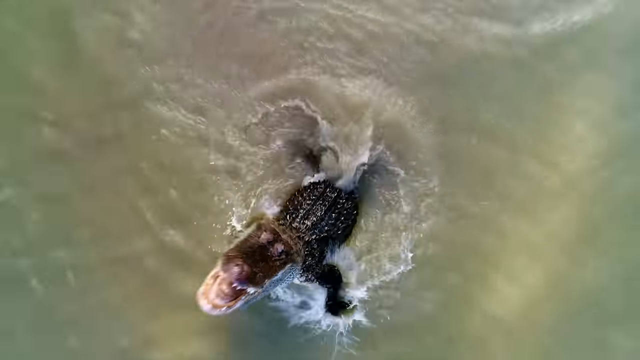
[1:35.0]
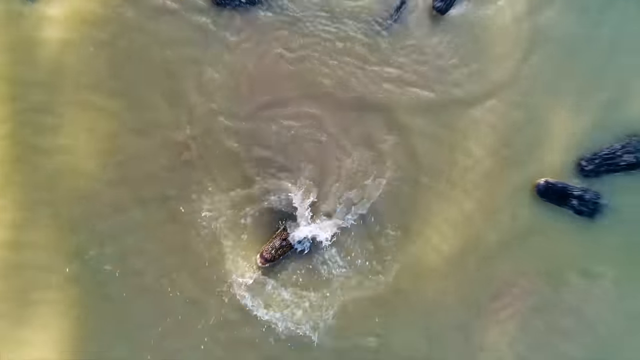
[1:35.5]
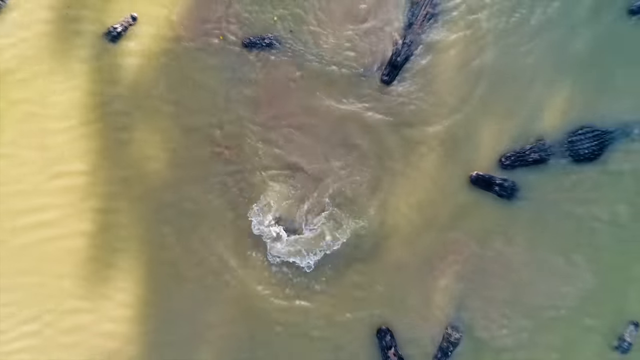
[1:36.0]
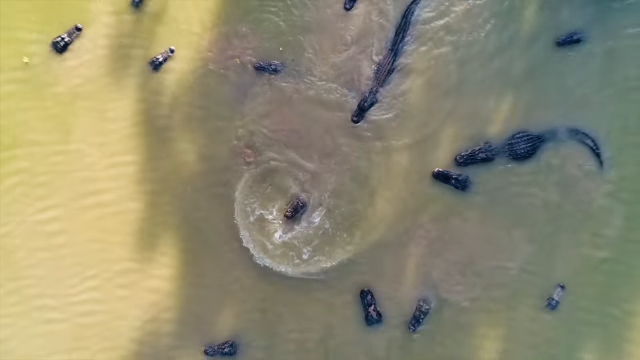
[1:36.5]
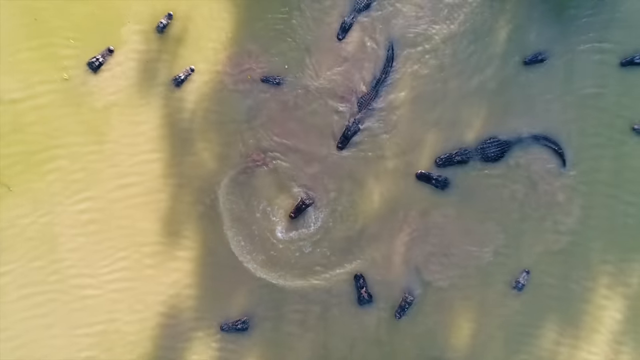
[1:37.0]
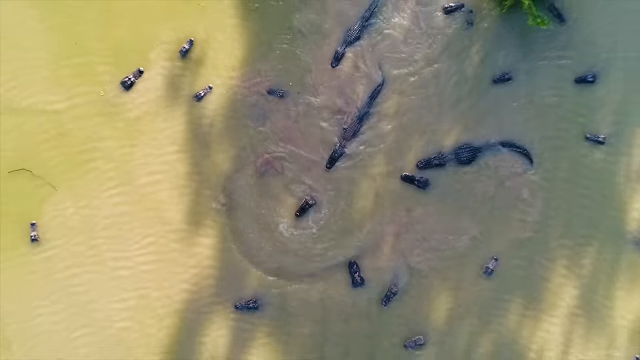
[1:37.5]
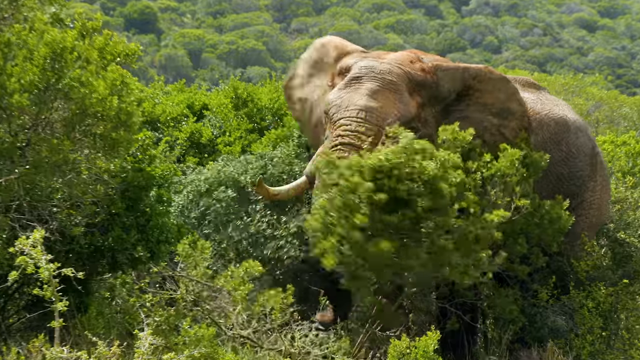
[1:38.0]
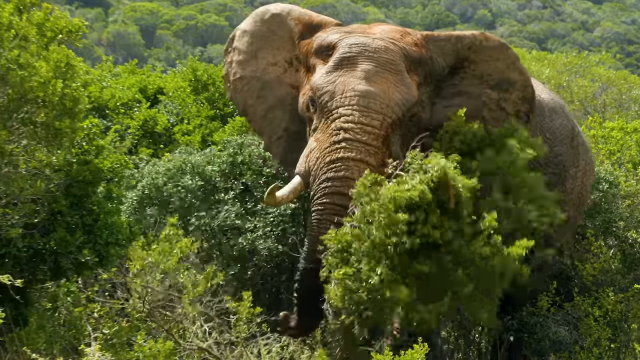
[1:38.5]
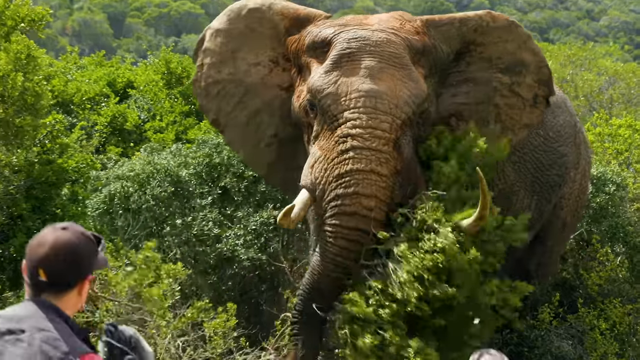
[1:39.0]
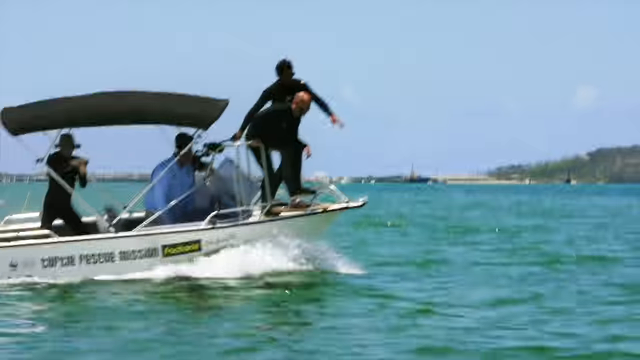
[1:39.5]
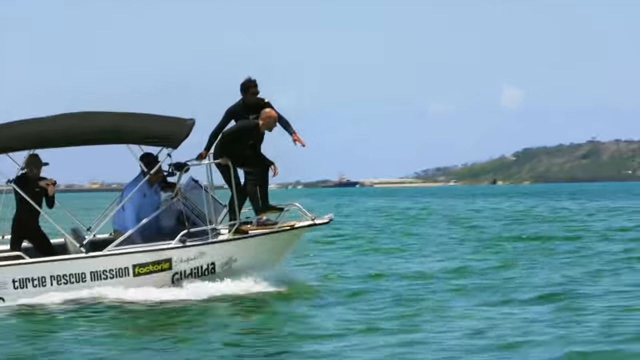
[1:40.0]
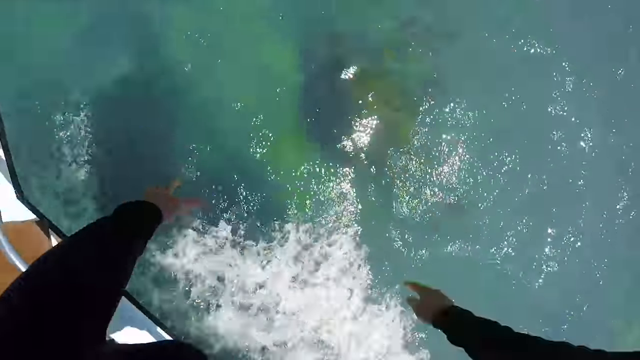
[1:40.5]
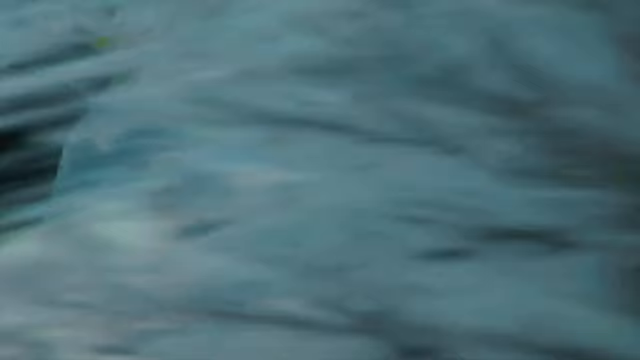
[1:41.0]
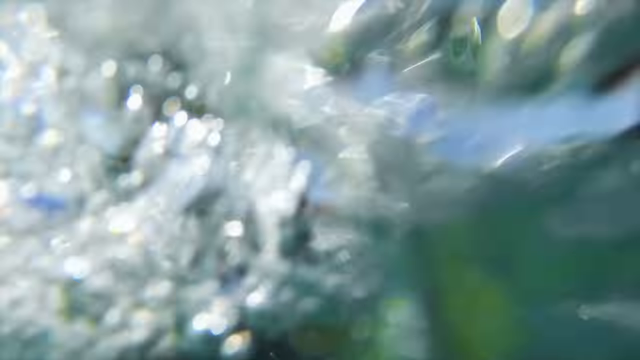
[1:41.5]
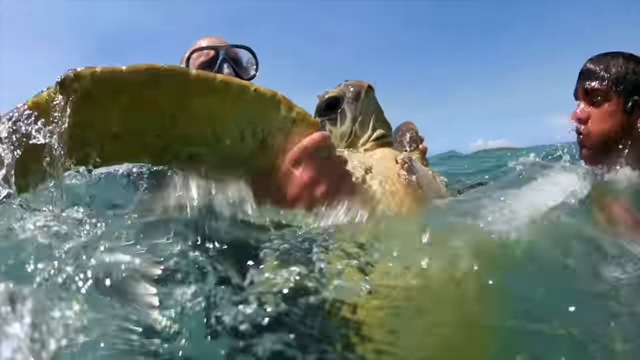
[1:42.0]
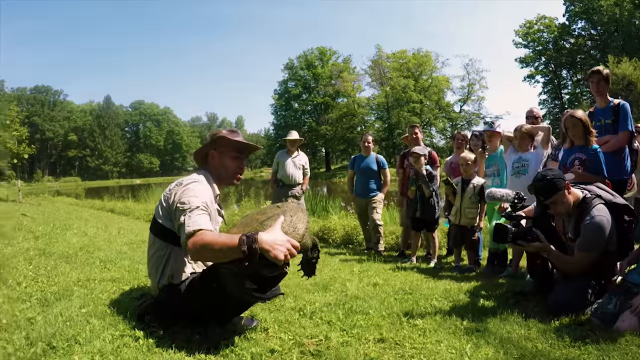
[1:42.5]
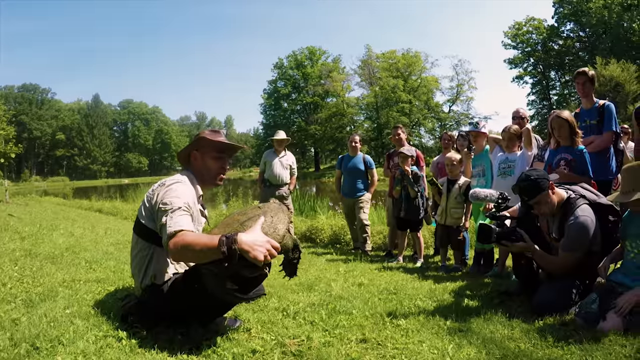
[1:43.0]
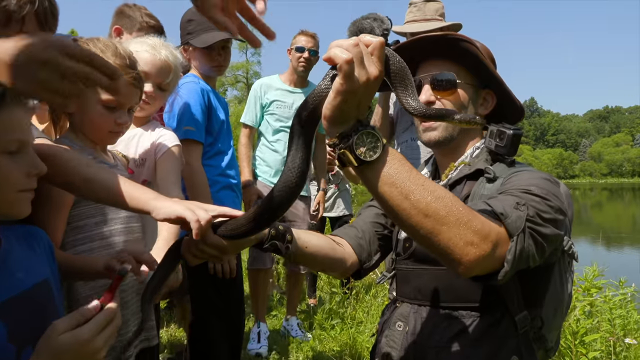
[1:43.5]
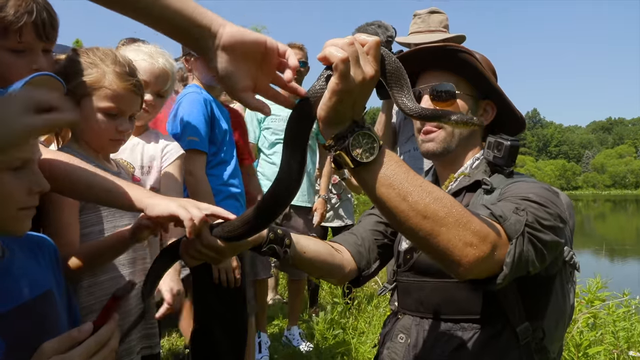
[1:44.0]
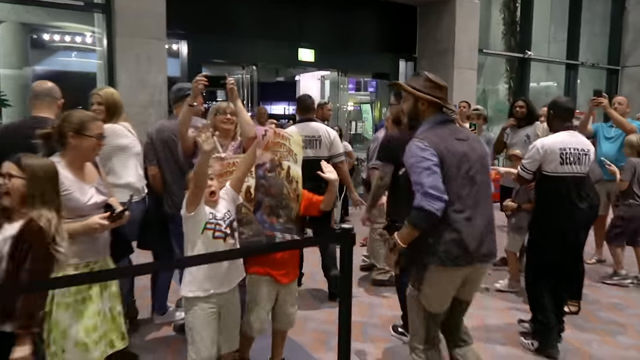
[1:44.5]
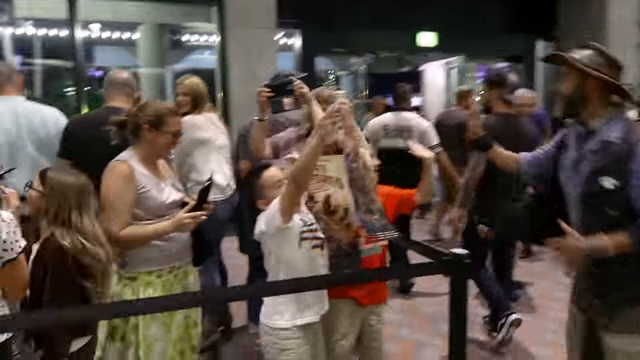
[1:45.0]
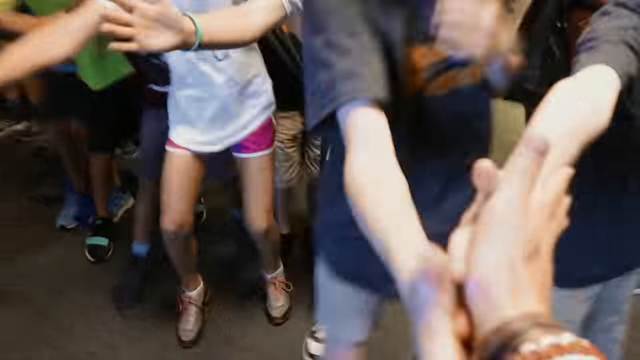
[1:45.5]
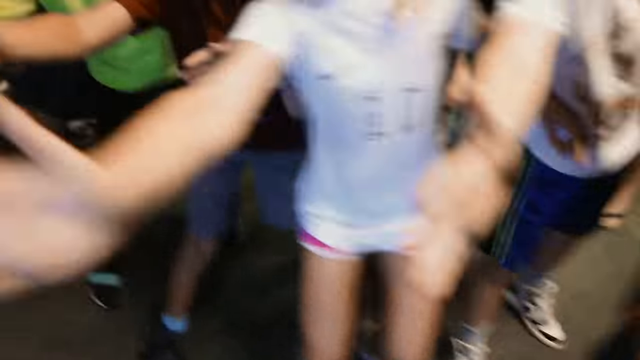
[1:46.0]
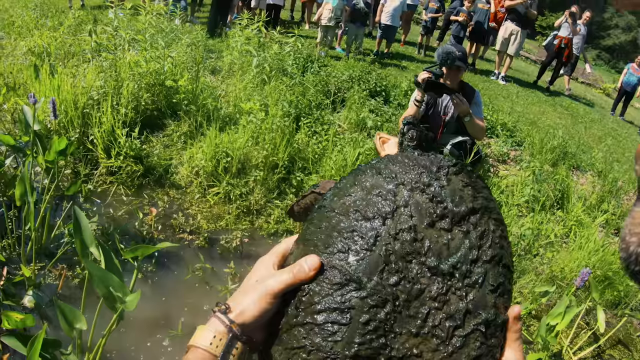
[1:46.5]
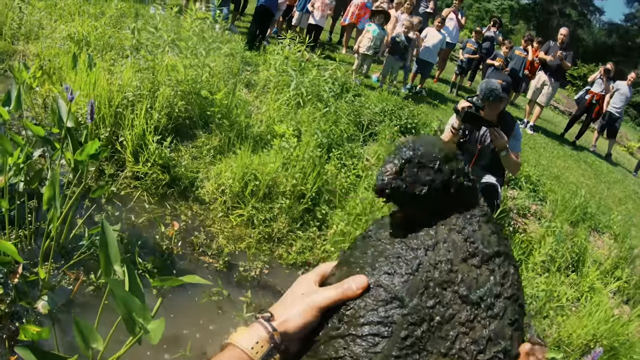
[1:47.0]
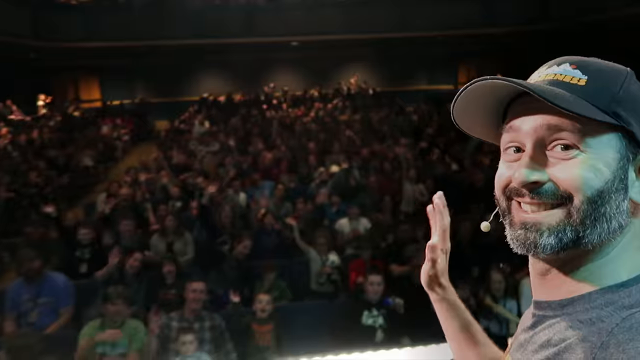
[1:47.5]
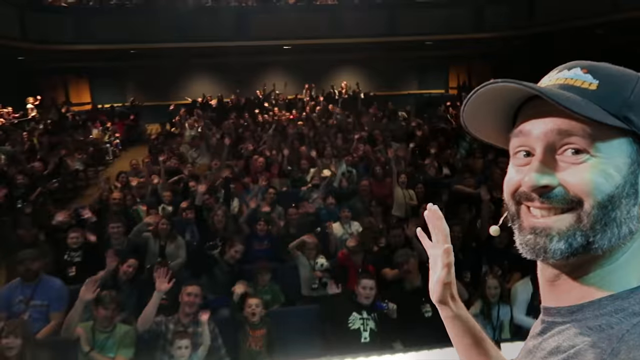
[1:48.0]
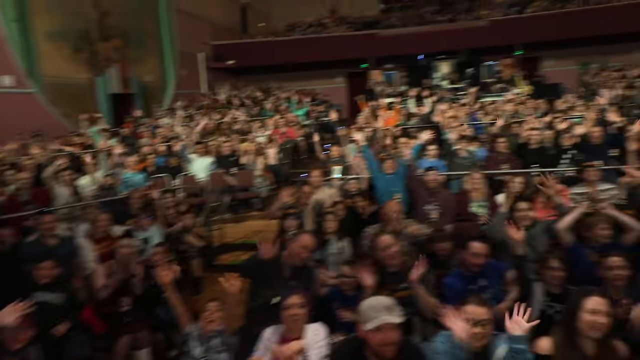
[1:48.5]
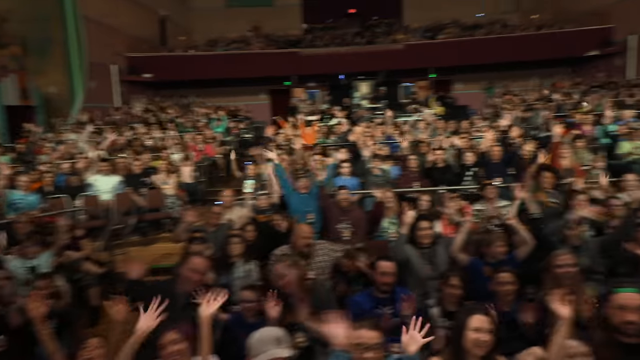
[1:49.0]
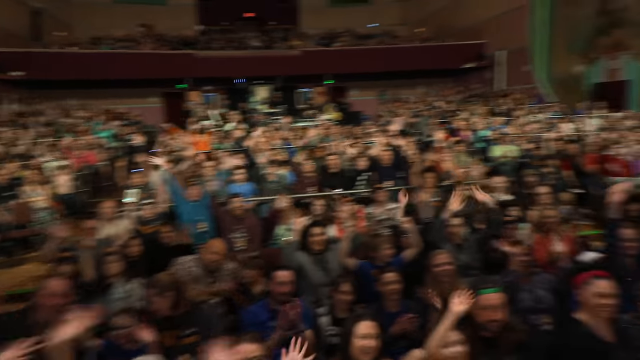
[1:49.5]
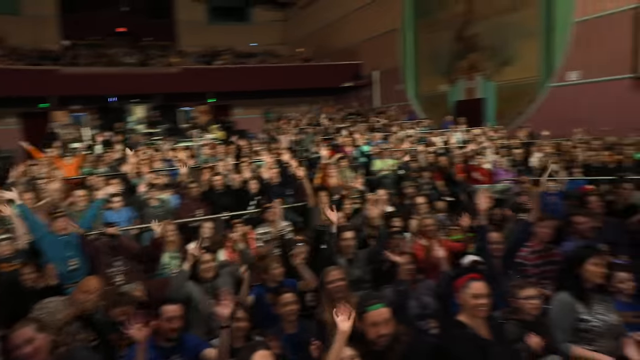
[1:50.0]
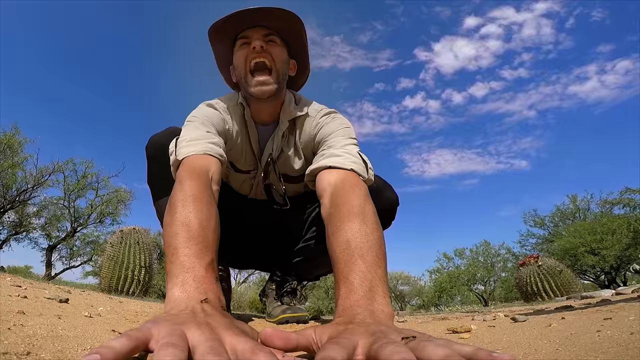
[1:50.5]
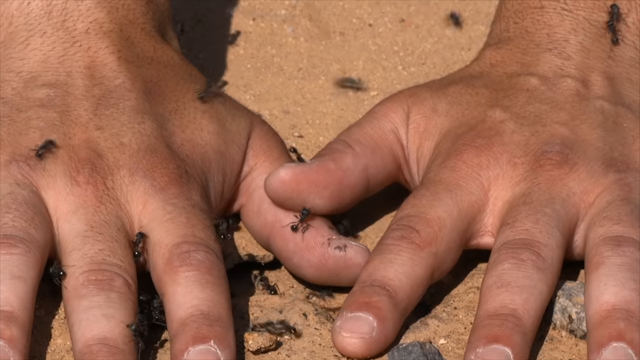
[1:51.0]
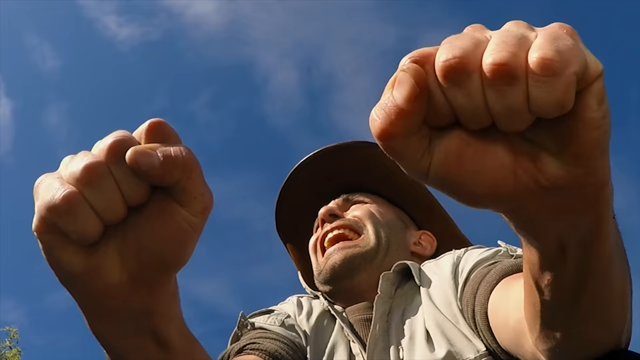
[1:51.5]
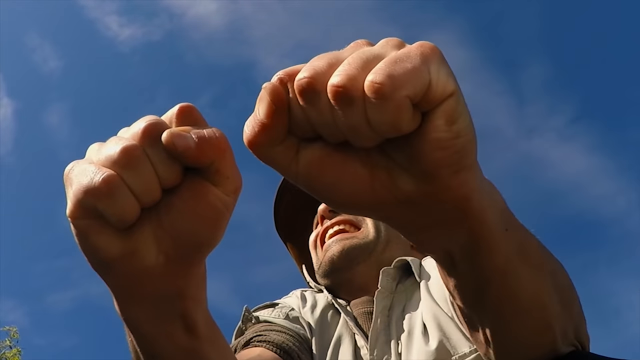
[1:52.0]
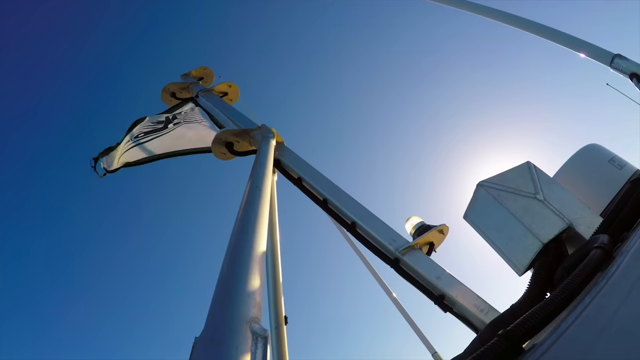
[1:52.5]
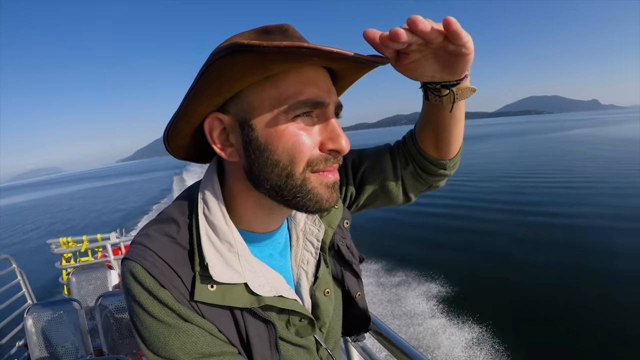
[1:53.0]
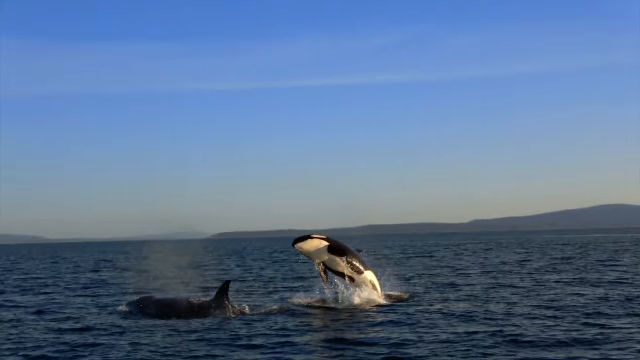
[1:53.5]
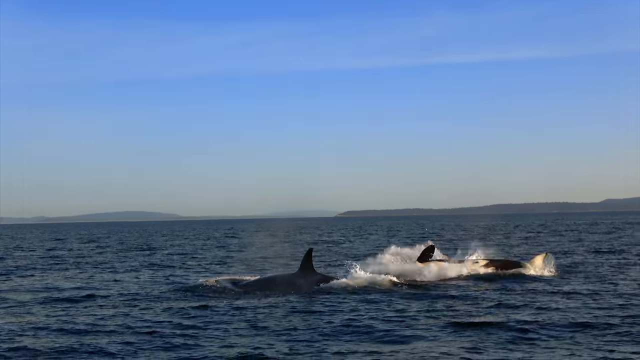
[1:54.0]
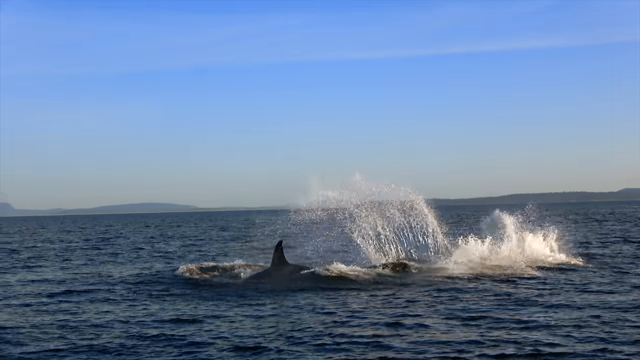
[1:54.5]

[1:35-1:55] Alligators are in a very murky water environment, then the shot switches to an elephant. Different shots follow, always featuring the same main host, who appears to be the host of a documentary; sometimes the camera crew is seen moving around him. Fast shots show the host holding different animals, a snake and ants. He stands in front of a crowd in some sort of auditorium, rides in boats, throws himself into the water with scuba gear, and greets people who are waiting for him, then is inside the auditorium. These seem like the opening shots of an advertisement for some sort of nature documentary.